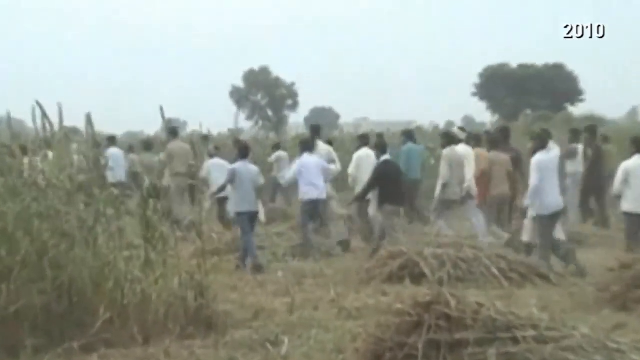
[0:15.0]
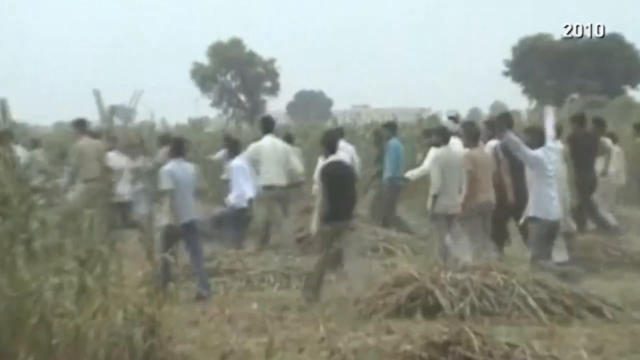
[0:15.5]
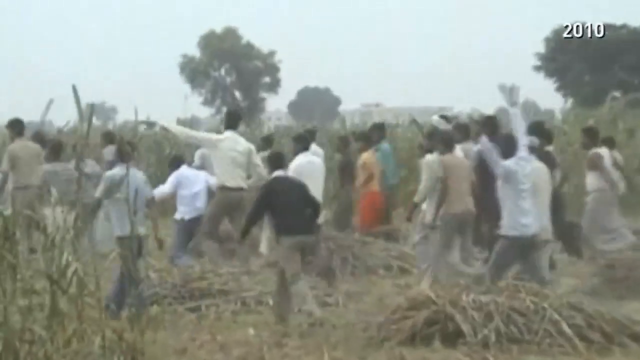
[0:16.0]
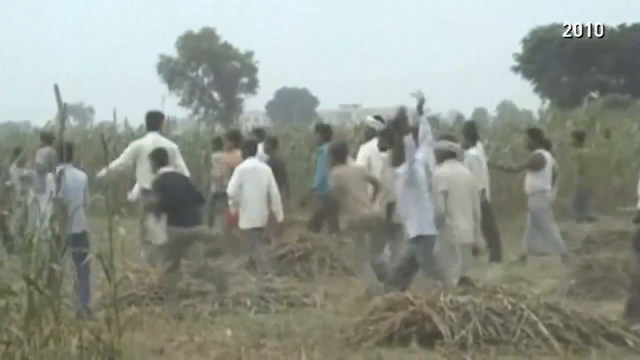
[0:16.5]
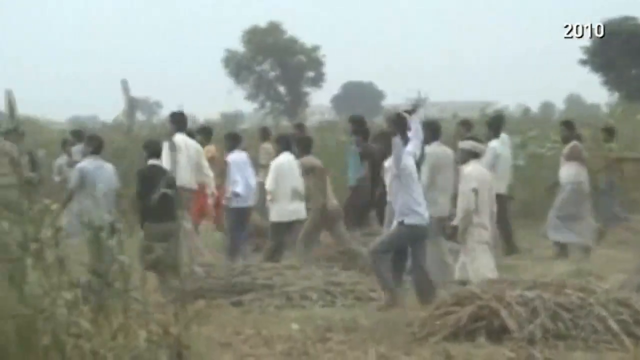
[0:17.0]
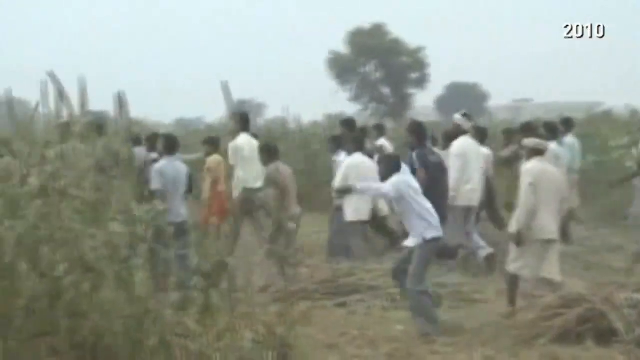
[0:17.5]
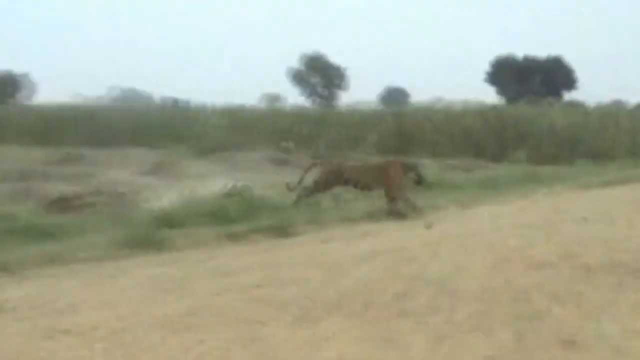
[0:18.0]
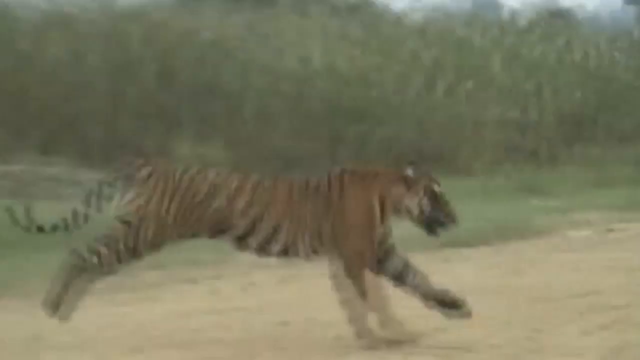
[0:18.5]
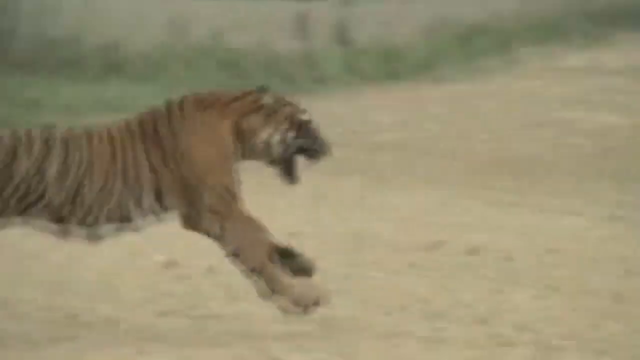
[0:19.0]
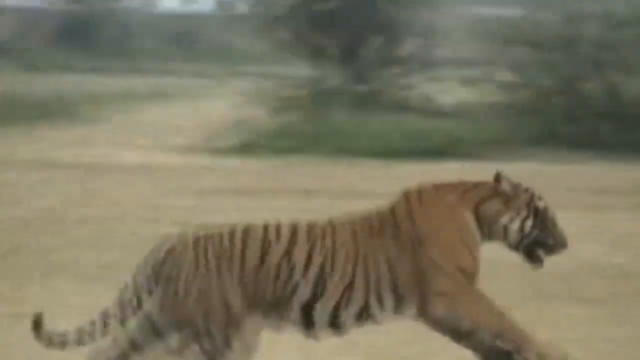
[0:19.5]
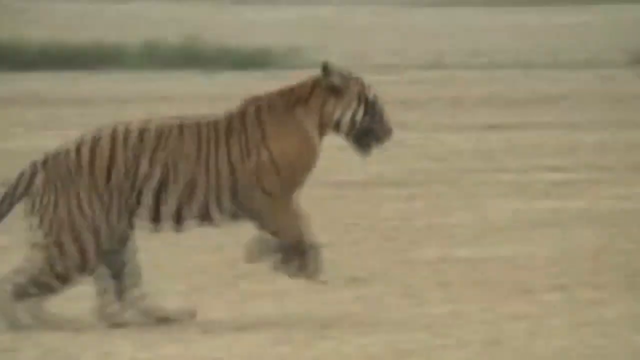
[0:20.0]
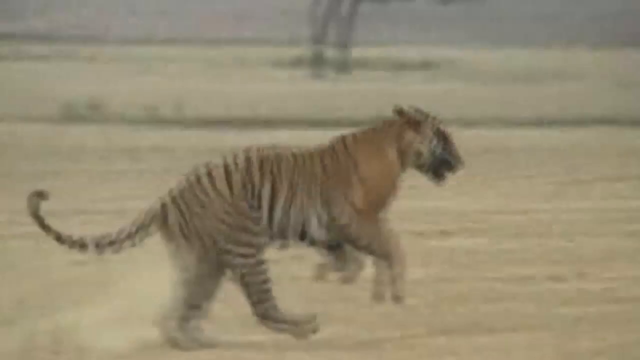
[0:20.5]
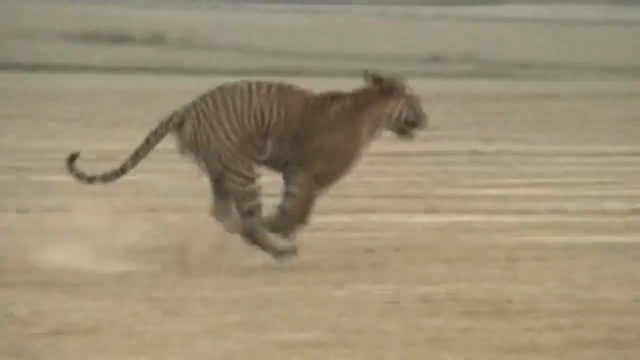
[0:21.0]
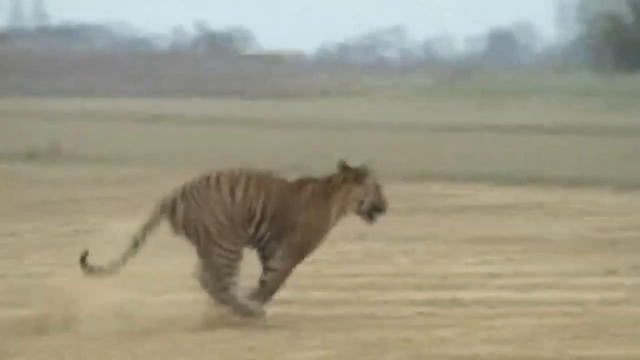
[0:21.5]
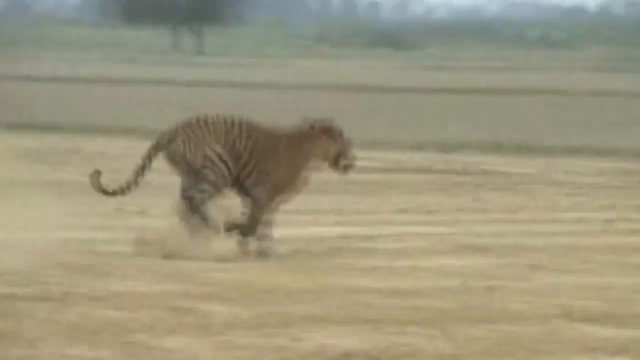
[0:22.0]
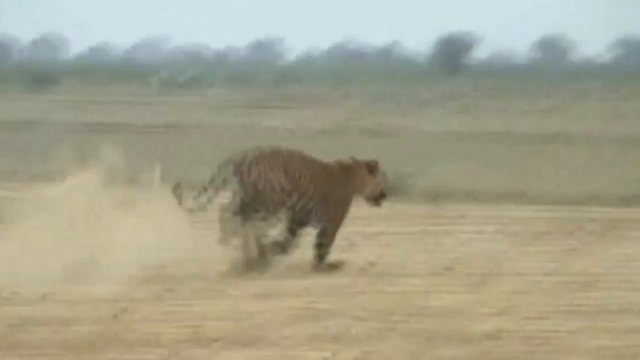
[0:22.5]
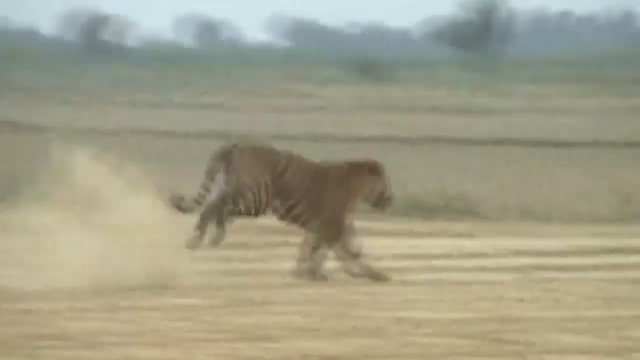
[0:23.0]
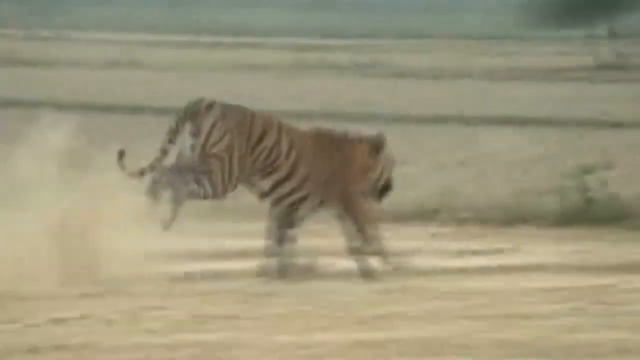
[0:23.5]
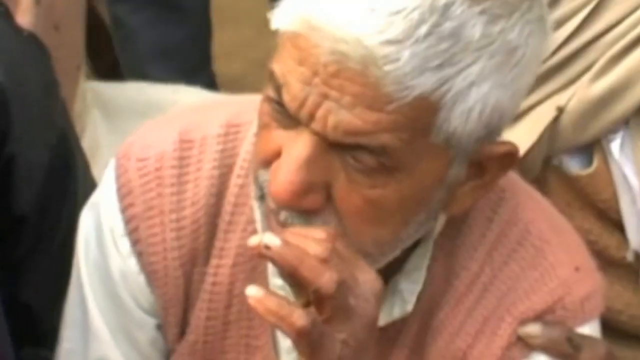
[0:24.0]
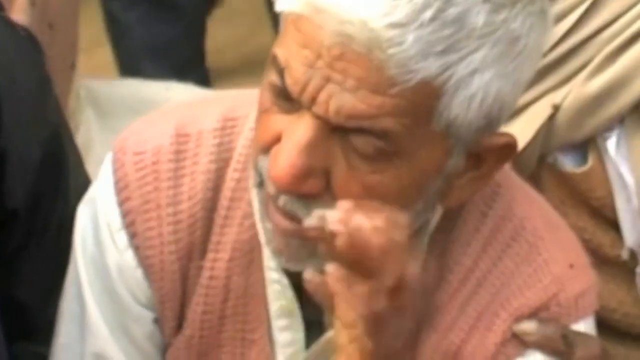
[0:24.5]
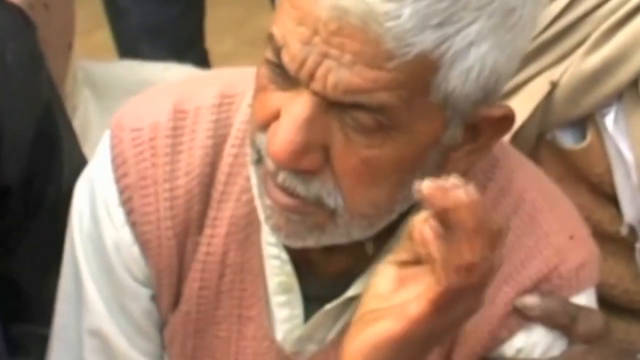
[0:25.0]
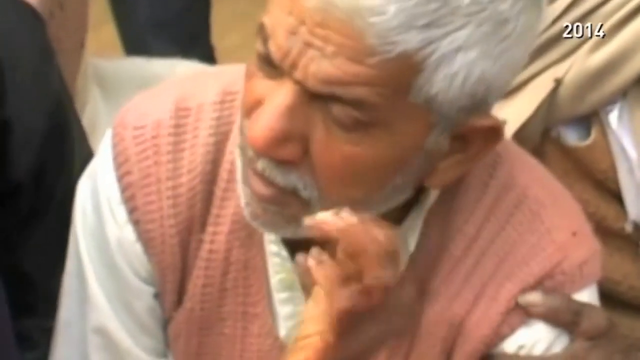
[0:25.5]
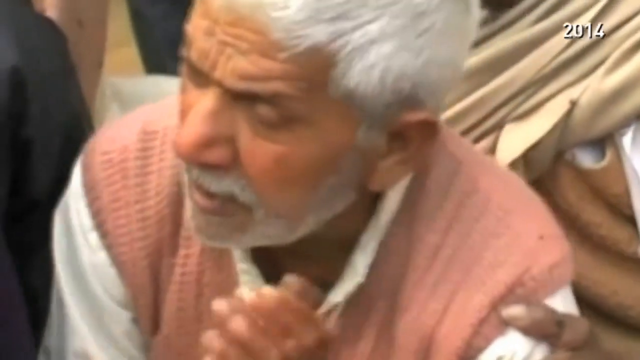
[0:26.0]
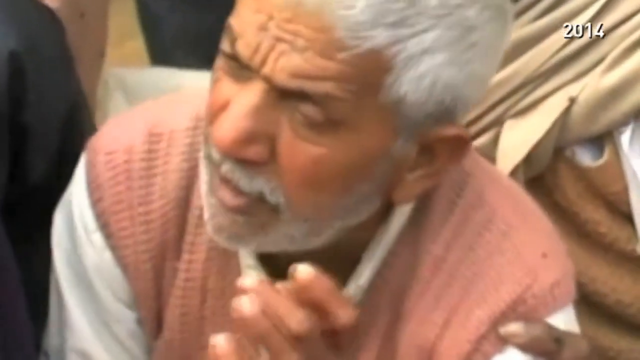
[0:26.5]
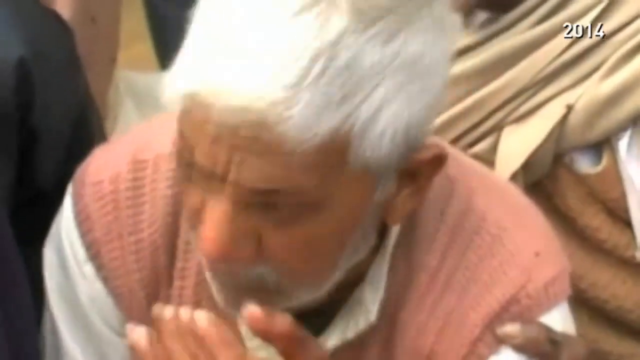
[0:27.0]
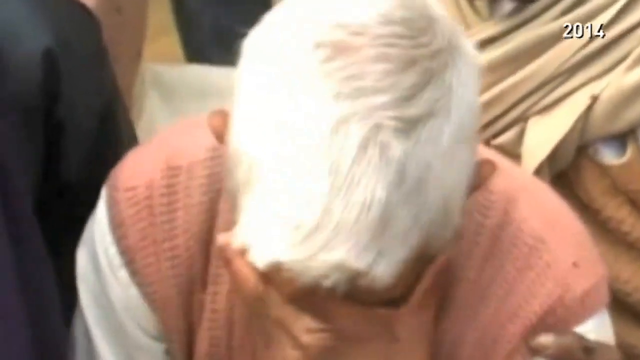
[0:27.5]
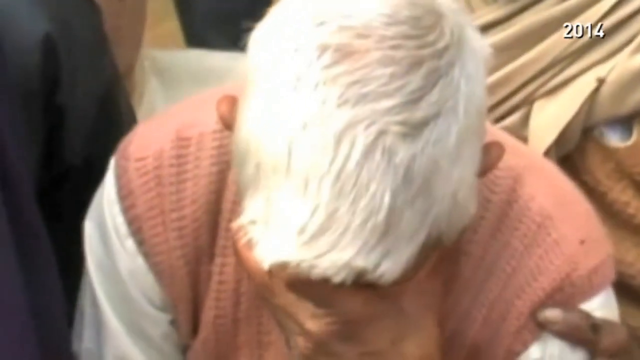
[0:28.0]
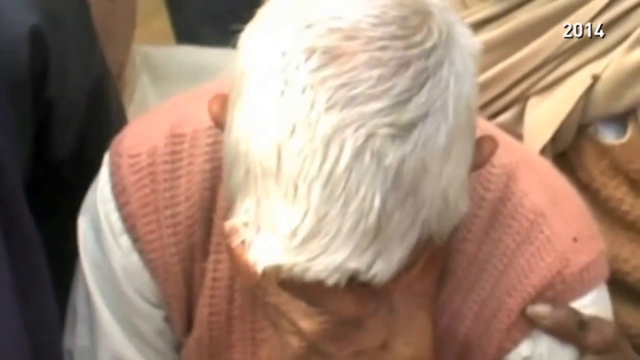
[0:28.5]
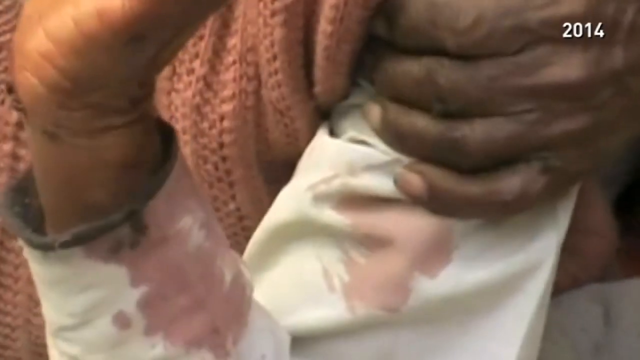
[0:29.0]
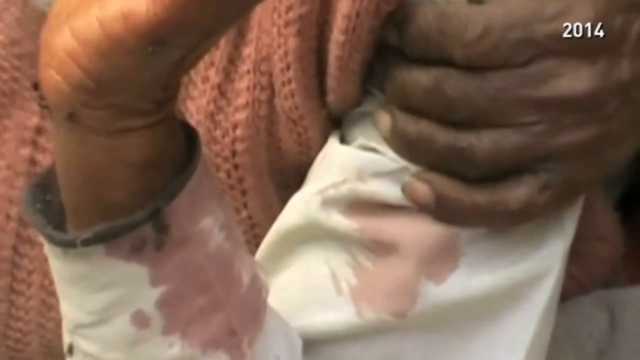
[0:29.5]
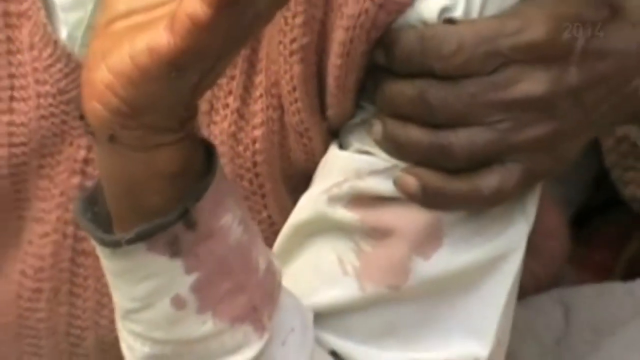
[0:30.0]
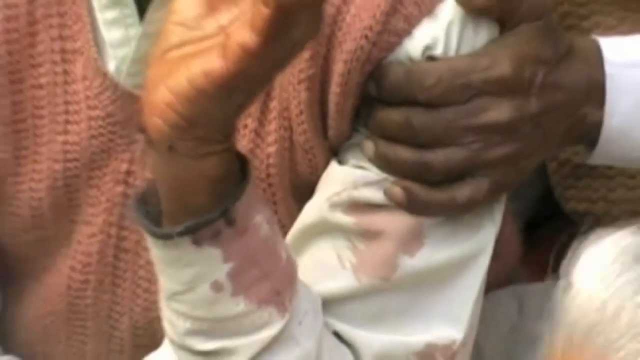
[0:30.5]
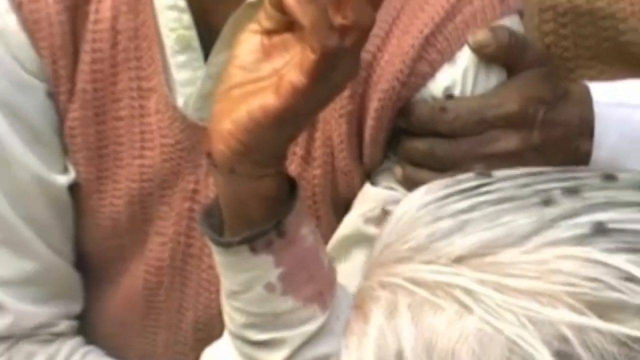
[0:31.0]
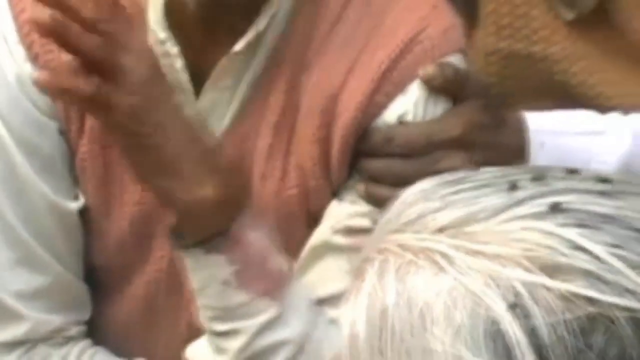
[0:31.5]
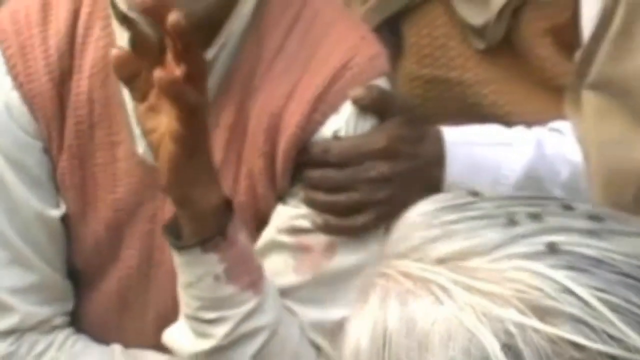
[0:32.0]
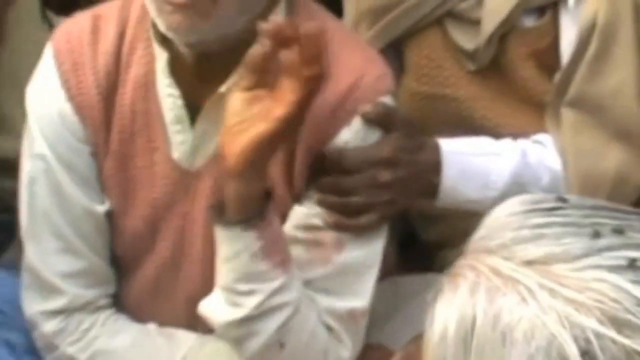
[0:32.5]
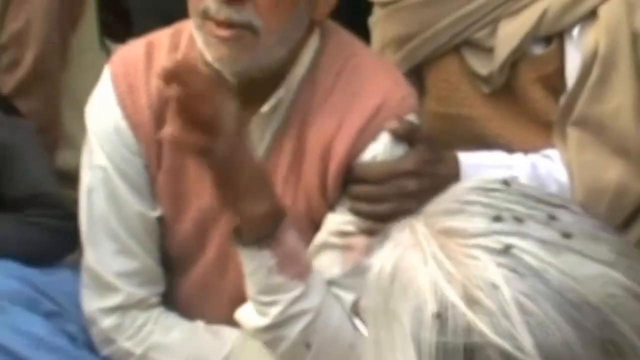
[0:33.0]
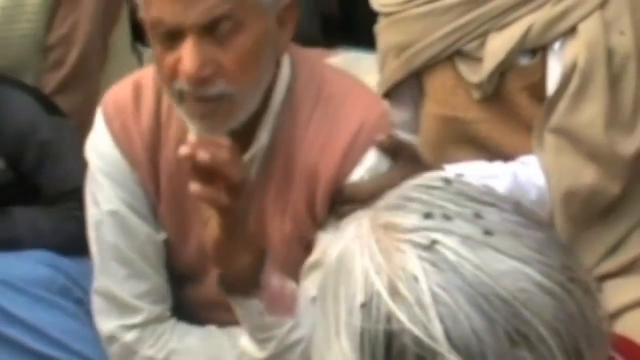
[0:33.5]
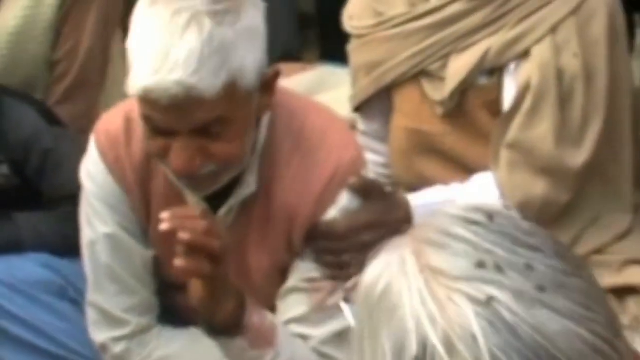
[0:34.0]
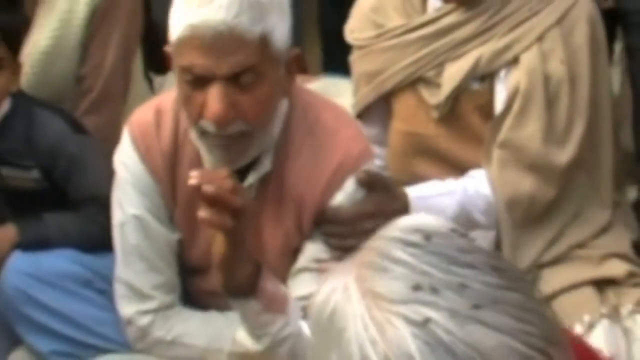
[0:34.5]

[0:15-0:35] Clearer footage shows the tiger, which is gigantic, galloping through the fields. This footage is from 2014. A man is covered in blood, and it is unclear how or why. Villagers run toward what is apparently the tiger, seemingly trying to capture or kill it. Flies are on the bloody man's arms. He is sitting while someone holds him, and he seems distraught.